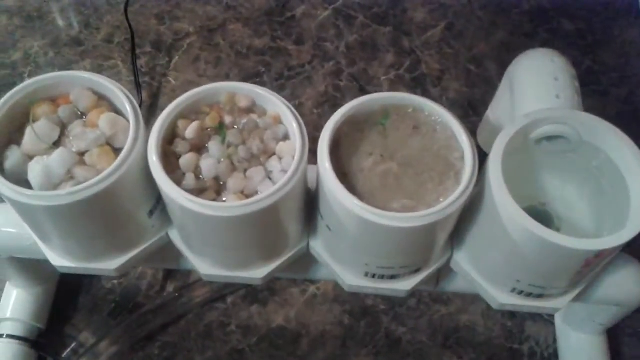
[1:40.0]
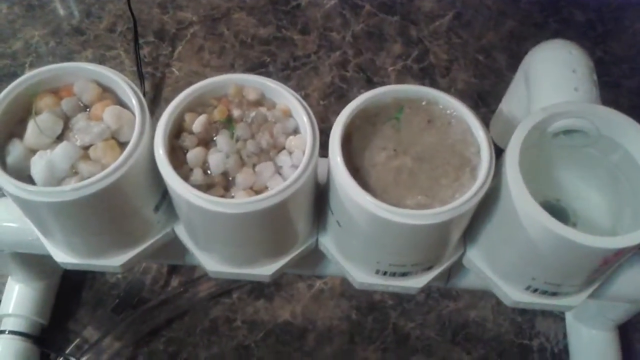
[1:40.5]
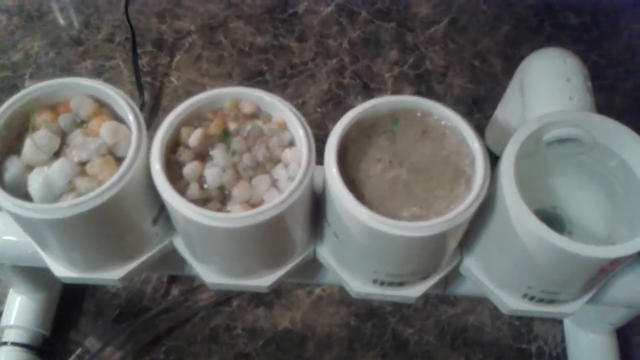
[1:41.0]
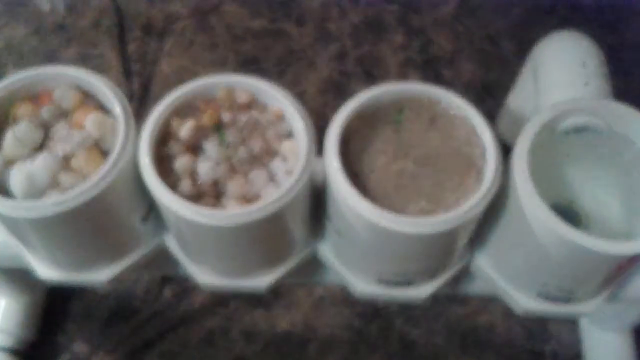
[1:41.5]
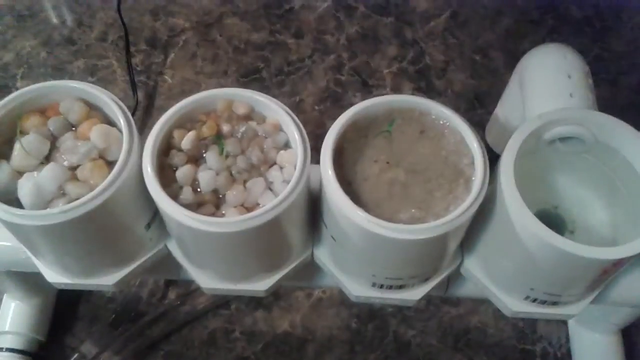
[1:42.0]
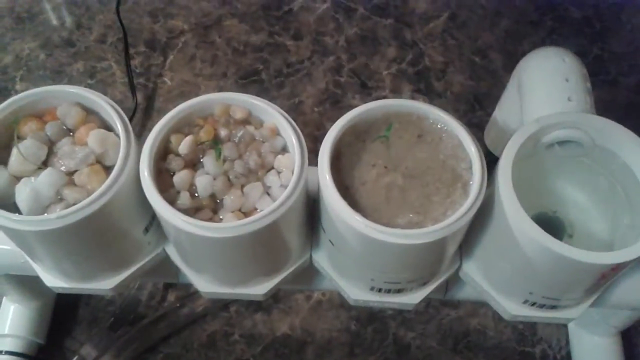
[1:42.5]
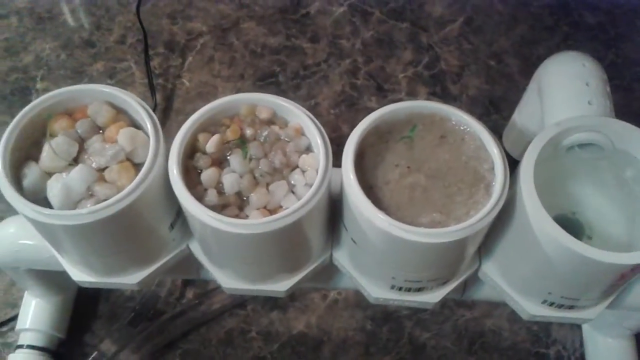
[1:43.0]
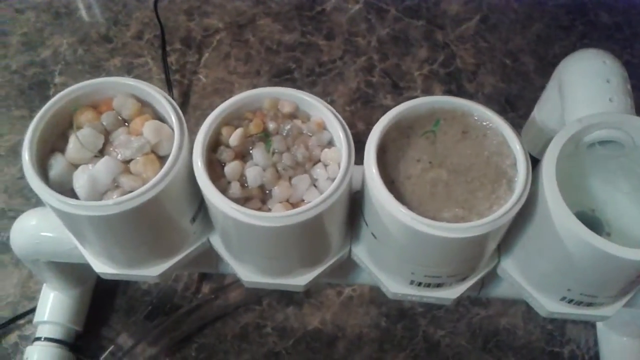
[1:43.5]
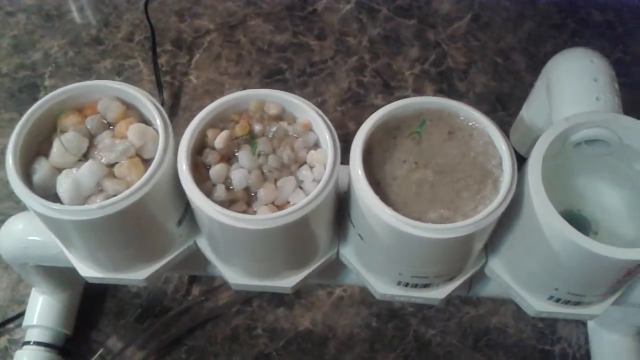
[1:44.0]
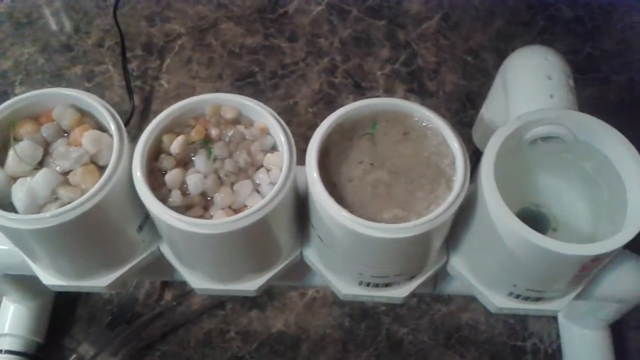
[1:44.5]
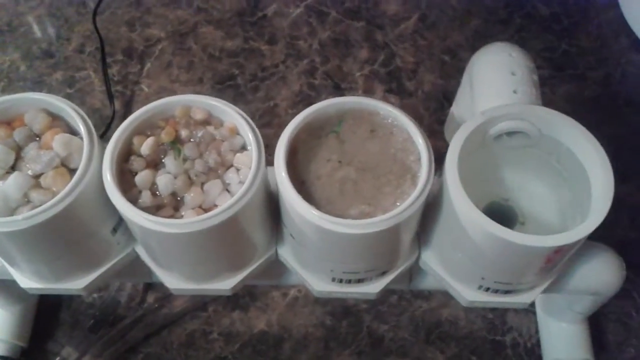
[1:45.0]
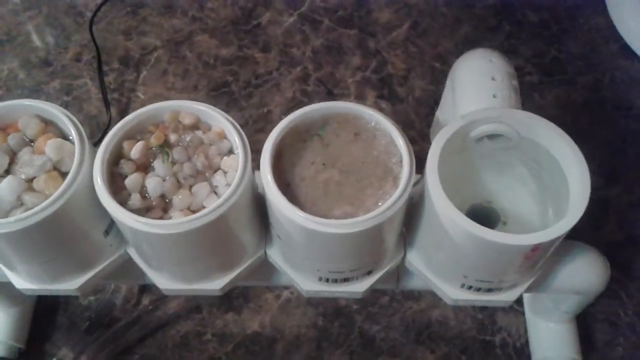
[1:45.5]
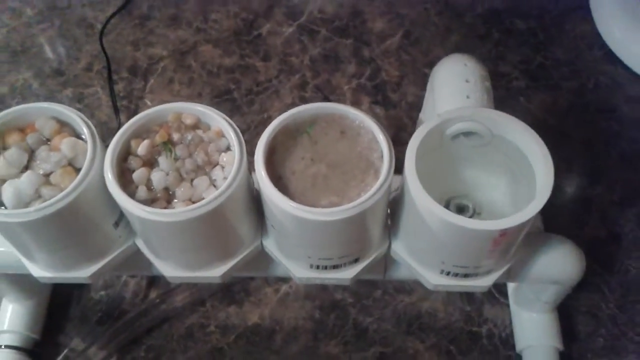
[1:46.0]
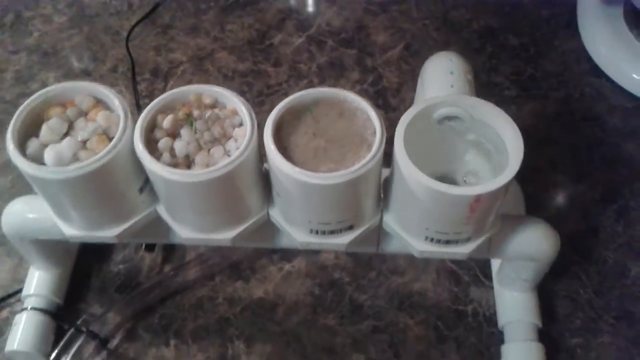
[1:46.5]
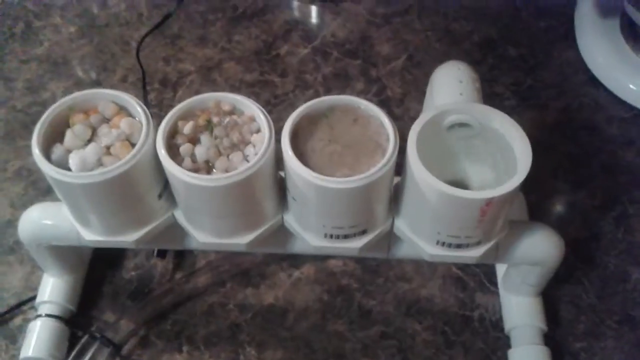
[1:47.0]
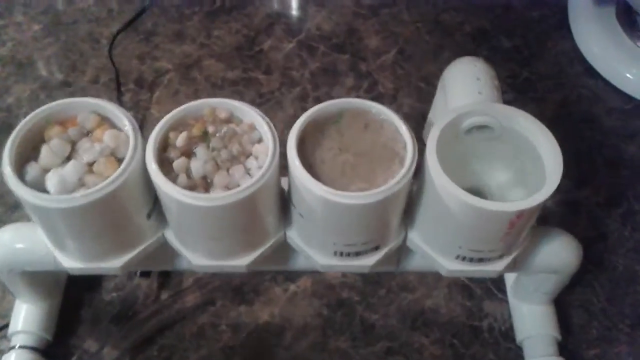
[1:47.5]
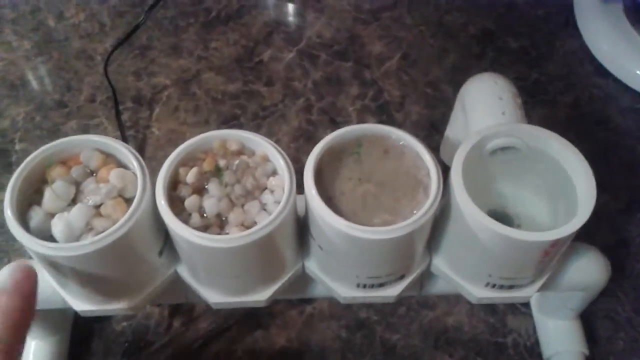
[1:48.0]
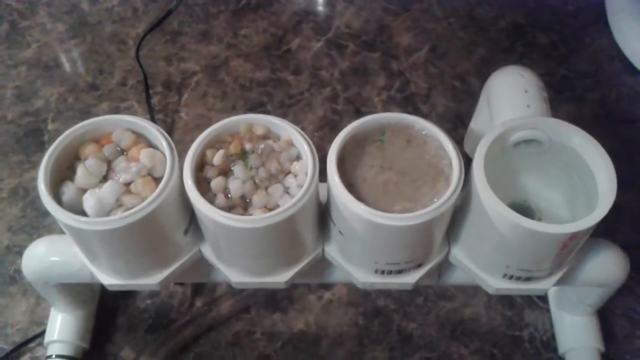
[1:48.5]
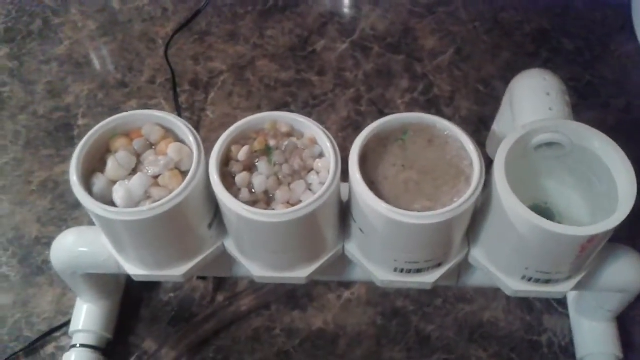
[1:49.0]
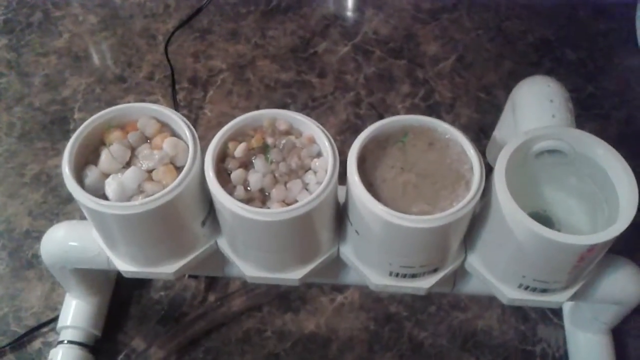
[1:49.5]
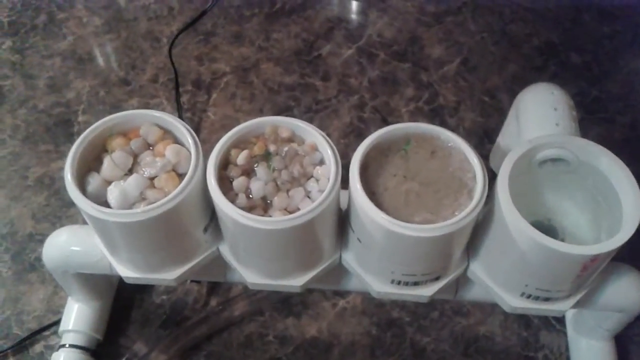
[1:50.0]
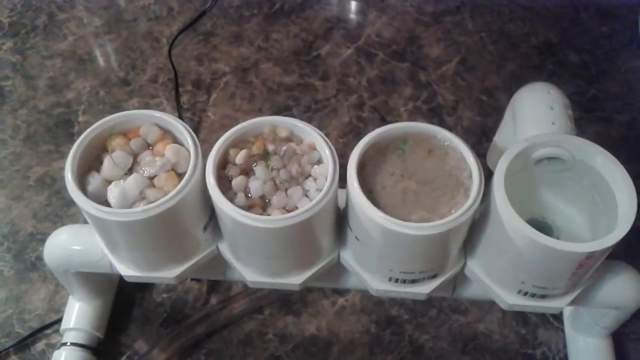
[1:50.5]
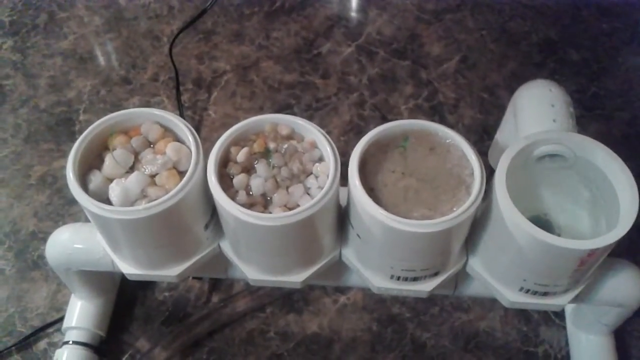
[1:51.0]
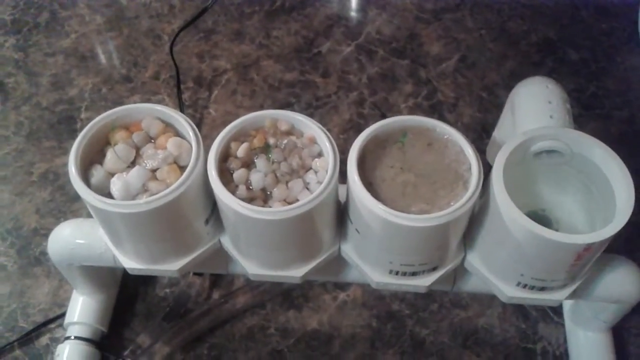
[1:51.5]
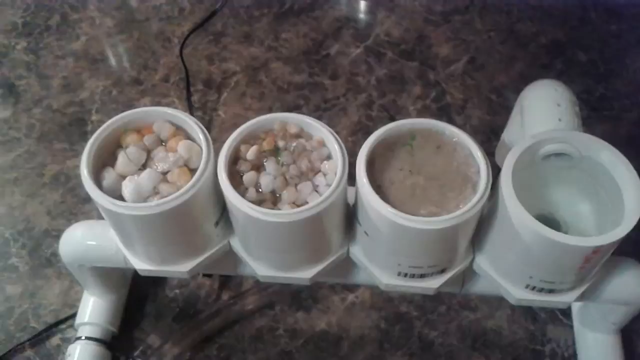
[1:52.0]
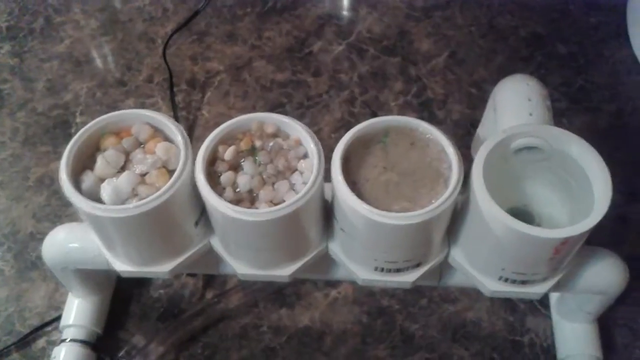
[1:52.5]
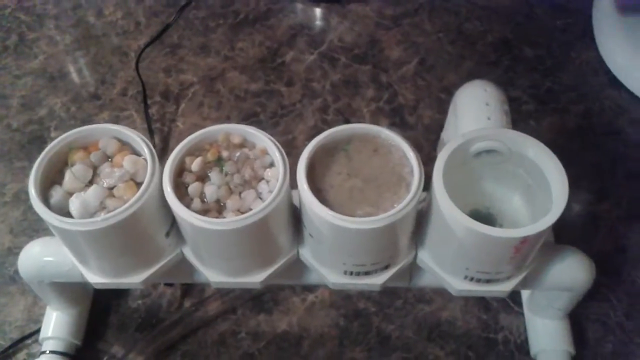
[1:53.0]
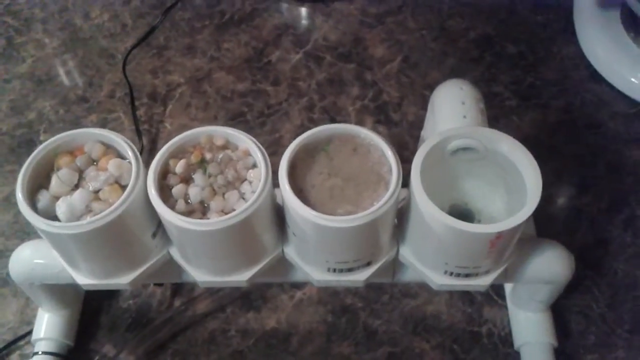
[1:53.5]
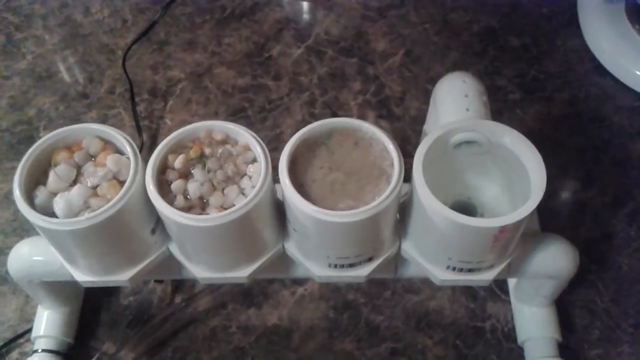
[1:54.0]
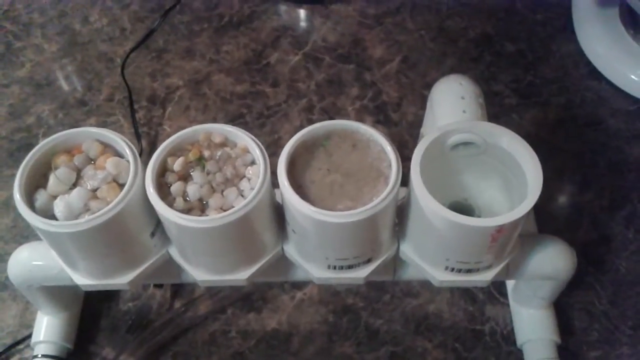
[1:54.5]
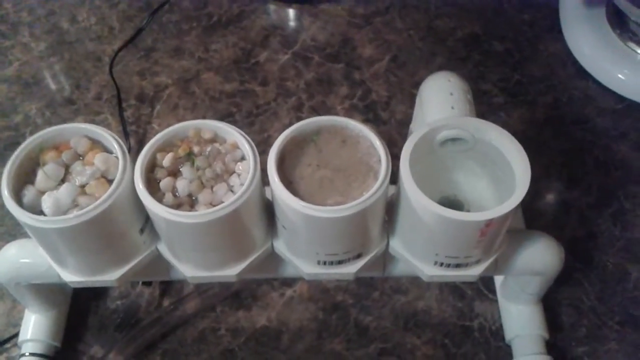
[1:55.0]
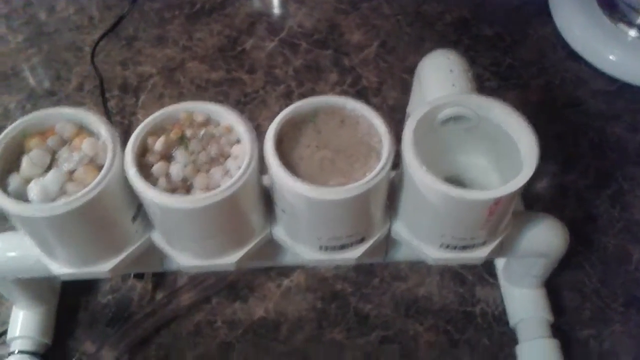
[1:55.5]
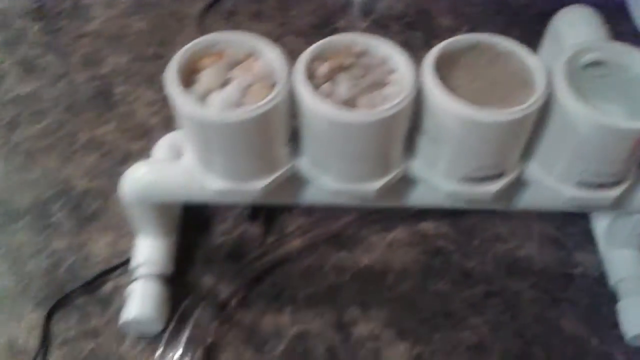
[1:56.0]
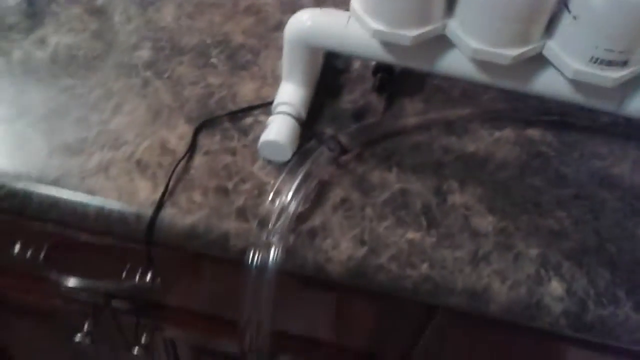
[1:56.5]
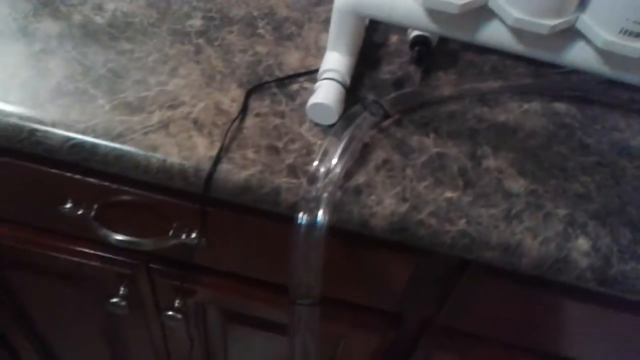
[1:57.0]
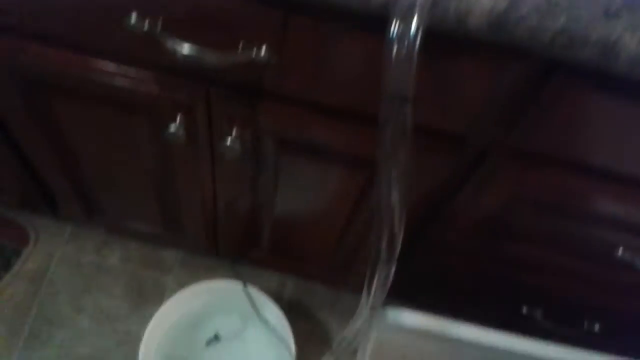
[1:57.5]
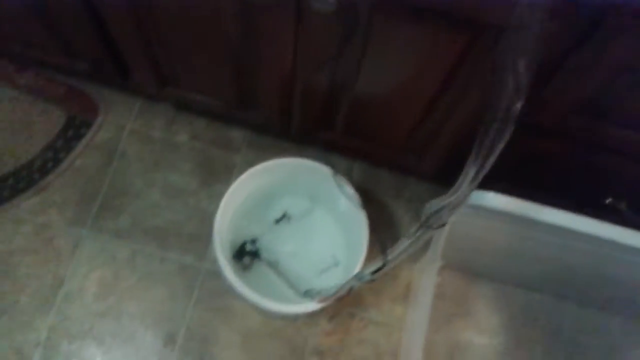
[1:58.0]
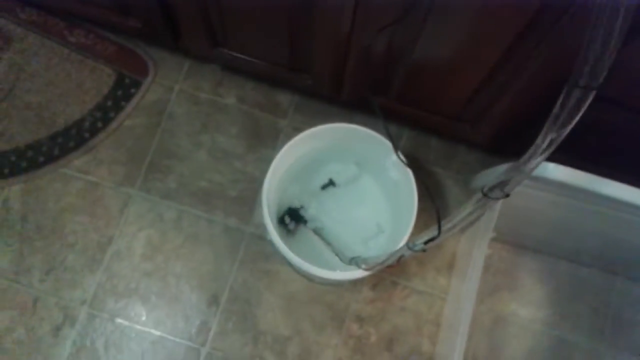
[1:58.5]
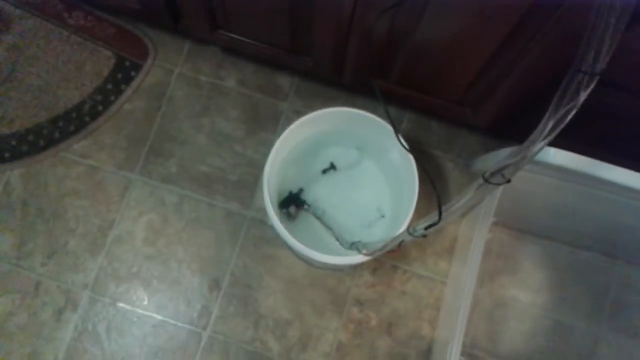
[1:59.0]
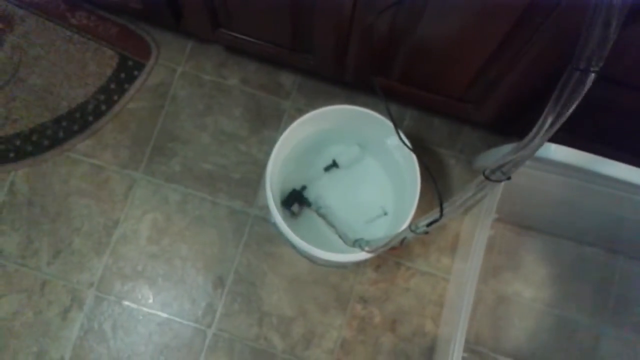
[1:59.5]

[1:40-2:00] The DIY how-to video, apparently about hydroponic gardening, shows a guy with three cylinders plus one on the end that is empty and has a drain hole. Two clear plastic tubing pipes come out and go into a bucket, and there is something electrical. The guy appears to start running a pump, and water comes out of the three cylinders into the empty one, which fills with water; the water then apparently goes down the pipe, into the tubing and into the bucket. The cylinder on the right looks like it holds sand, the one next to it almost looks like it holds rocks resembling scallops, and the next looks like white river rock.